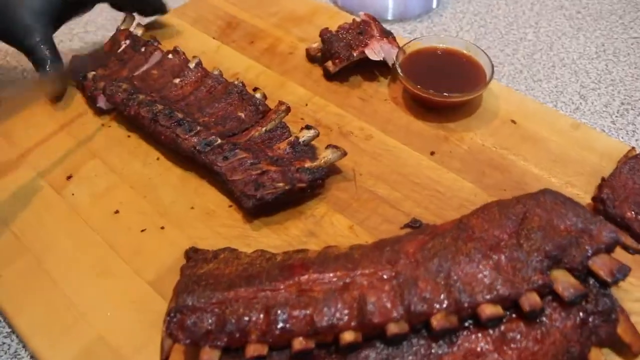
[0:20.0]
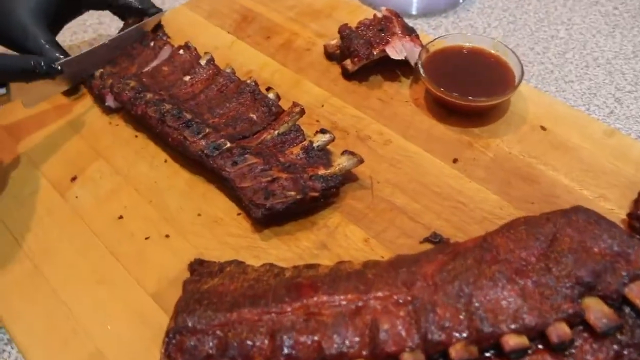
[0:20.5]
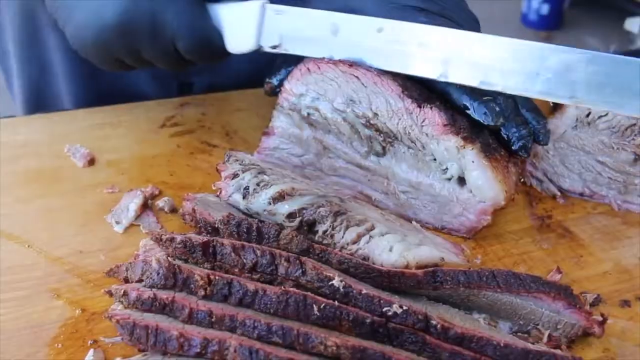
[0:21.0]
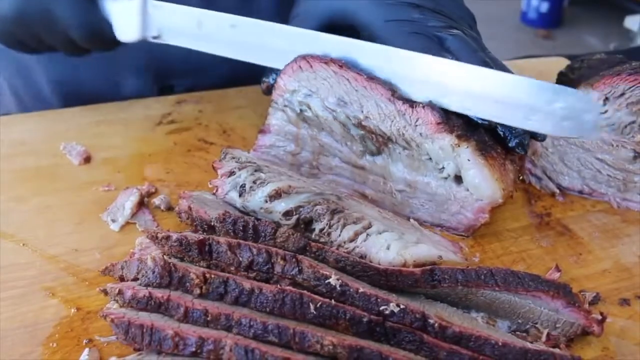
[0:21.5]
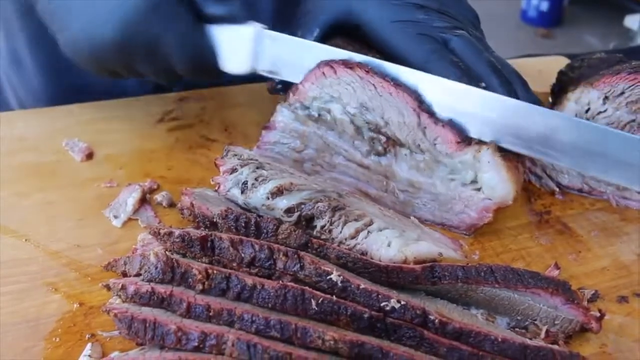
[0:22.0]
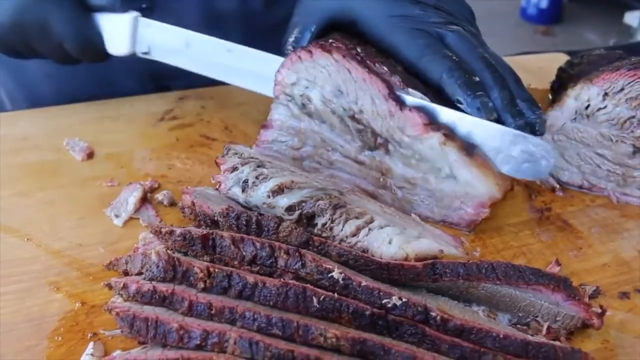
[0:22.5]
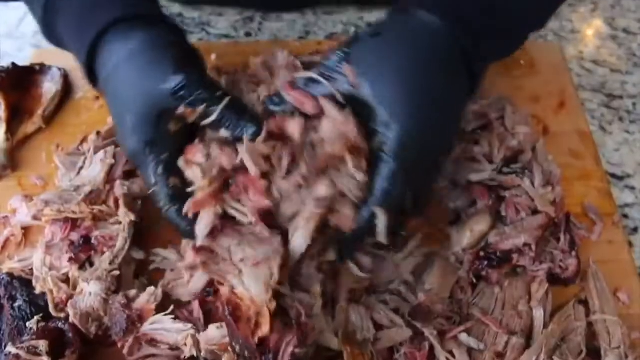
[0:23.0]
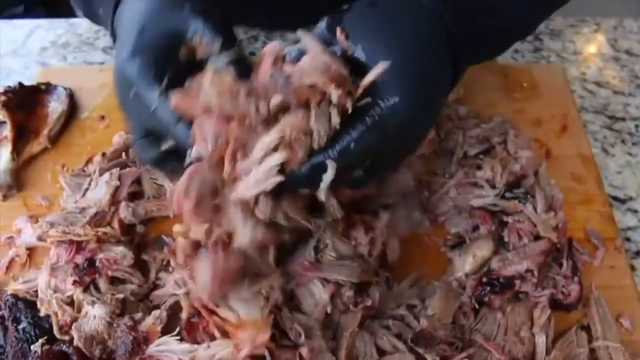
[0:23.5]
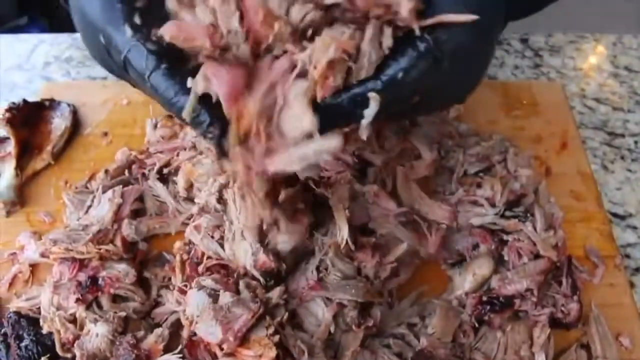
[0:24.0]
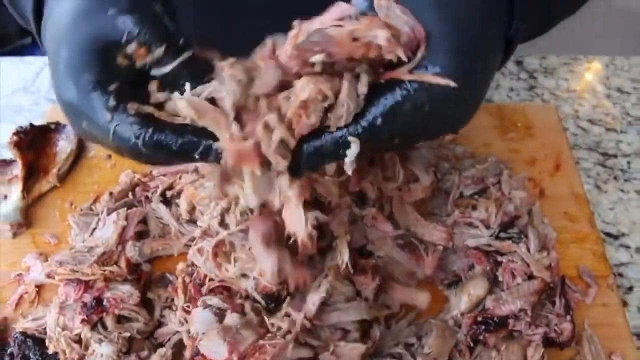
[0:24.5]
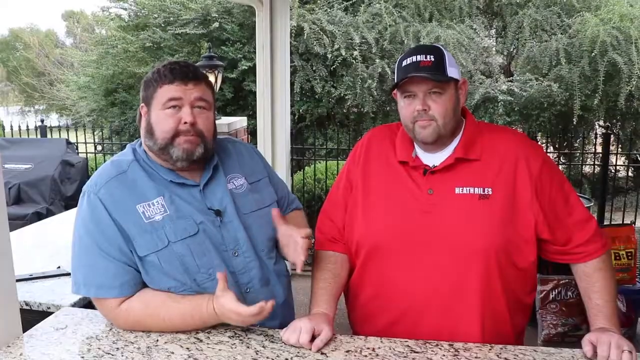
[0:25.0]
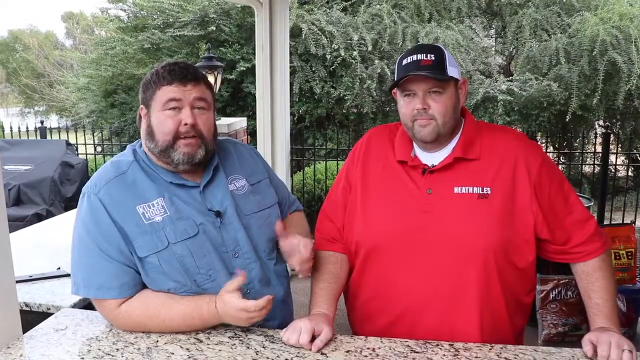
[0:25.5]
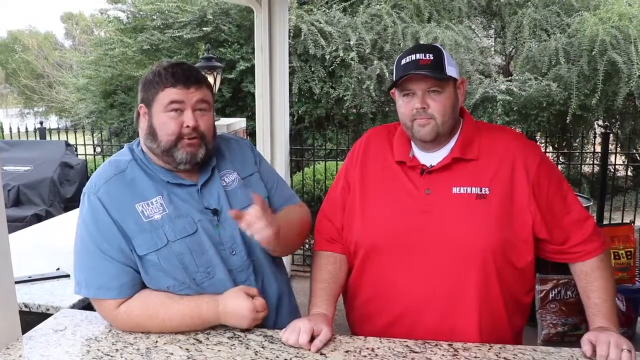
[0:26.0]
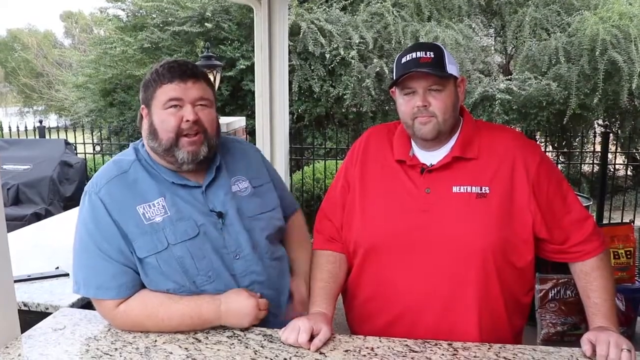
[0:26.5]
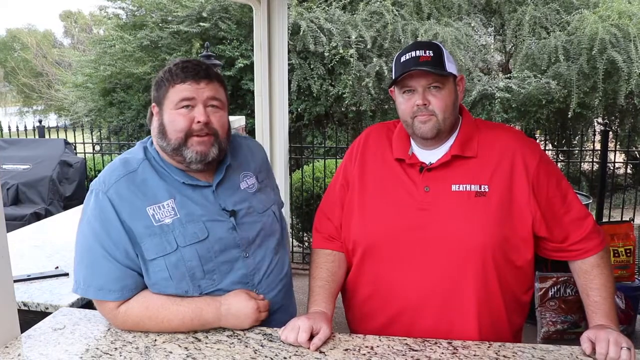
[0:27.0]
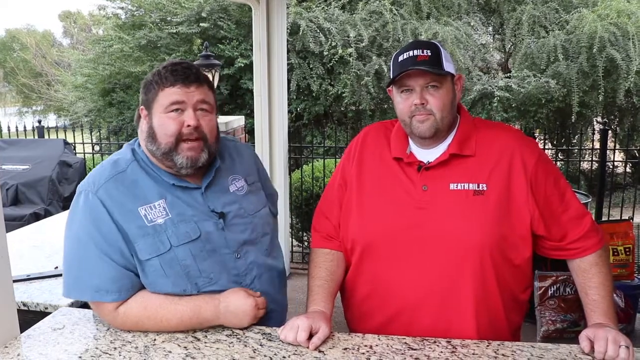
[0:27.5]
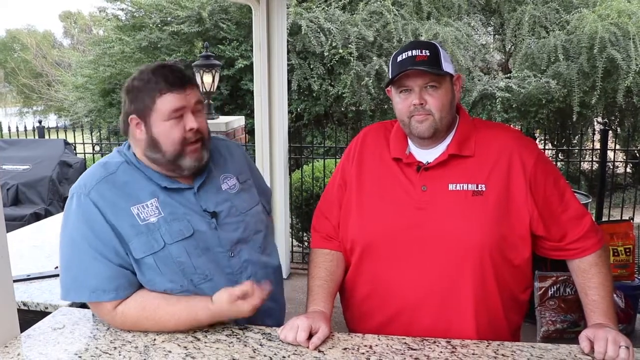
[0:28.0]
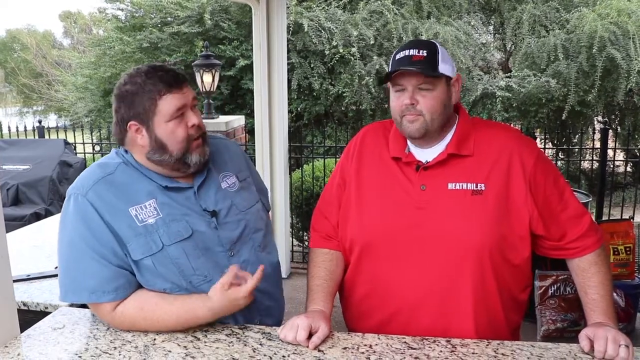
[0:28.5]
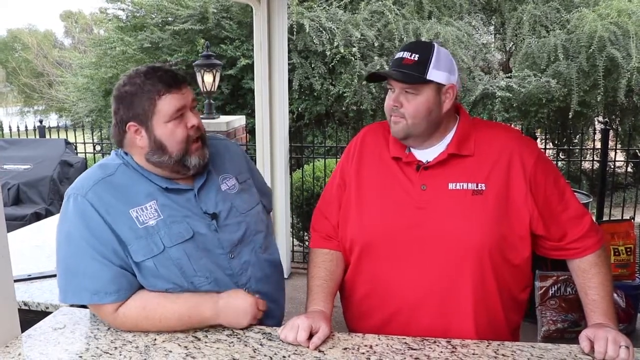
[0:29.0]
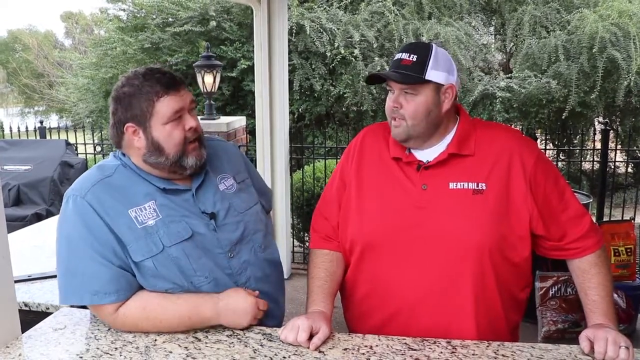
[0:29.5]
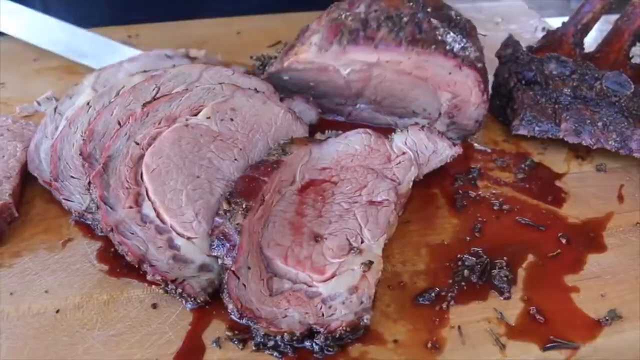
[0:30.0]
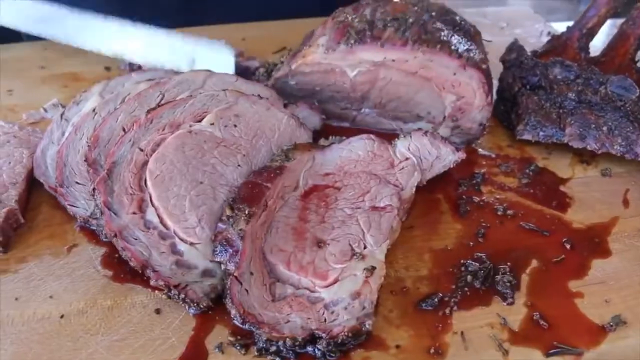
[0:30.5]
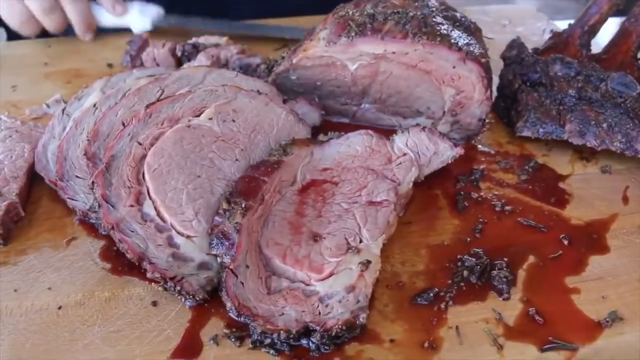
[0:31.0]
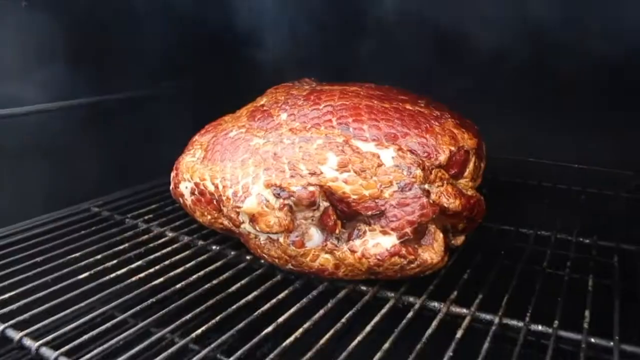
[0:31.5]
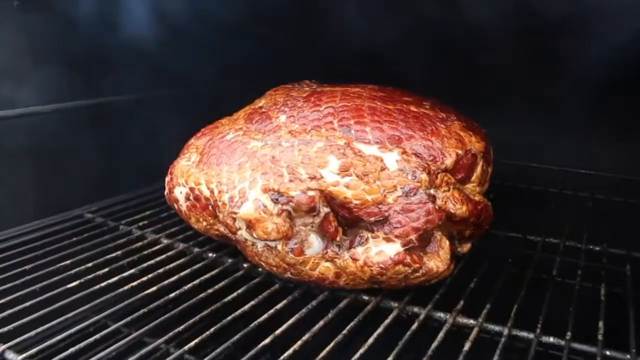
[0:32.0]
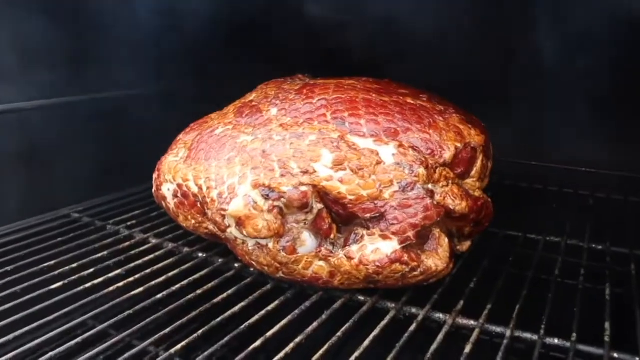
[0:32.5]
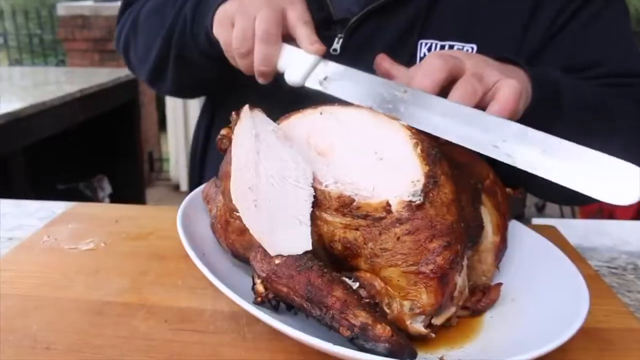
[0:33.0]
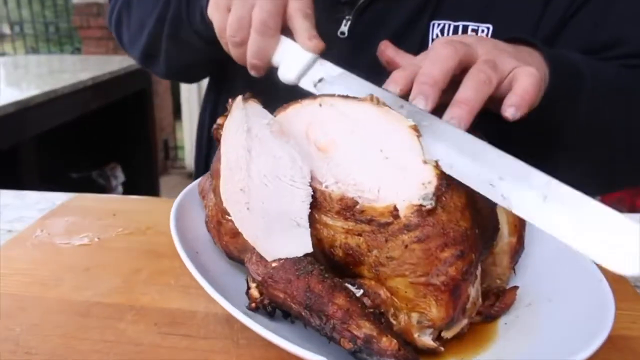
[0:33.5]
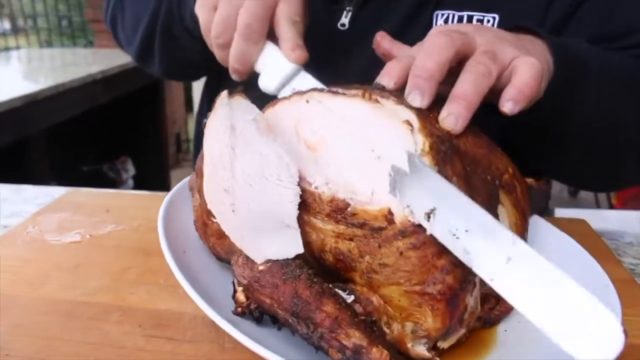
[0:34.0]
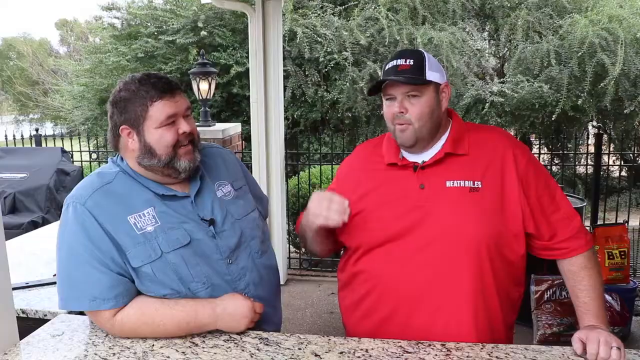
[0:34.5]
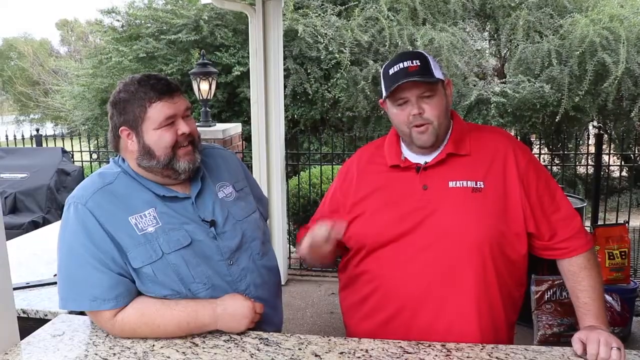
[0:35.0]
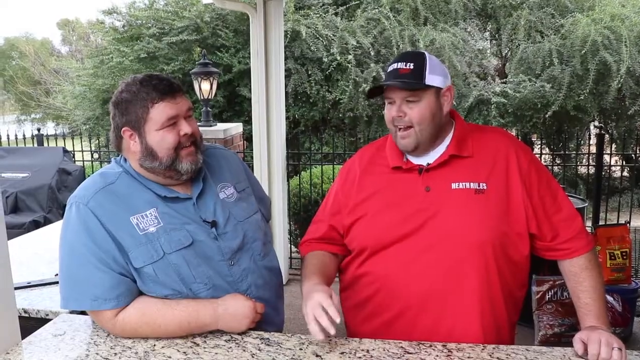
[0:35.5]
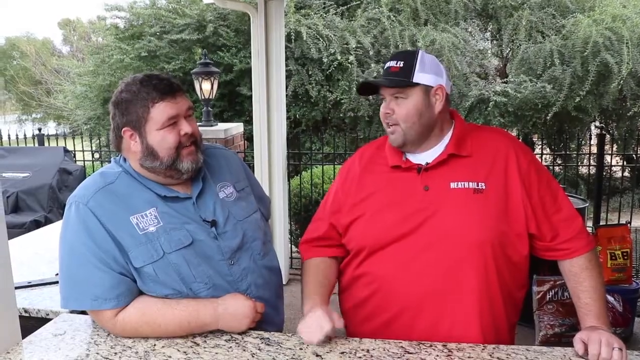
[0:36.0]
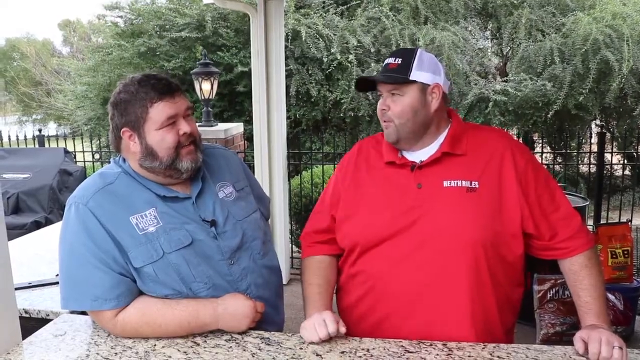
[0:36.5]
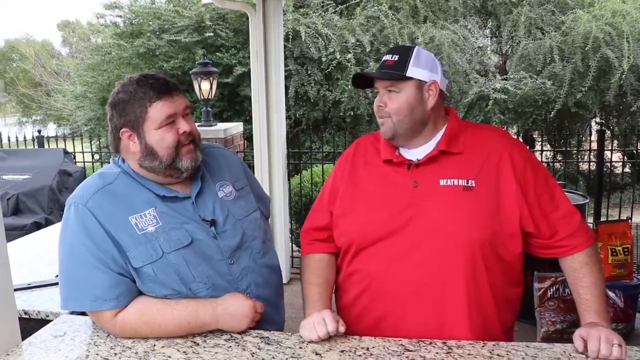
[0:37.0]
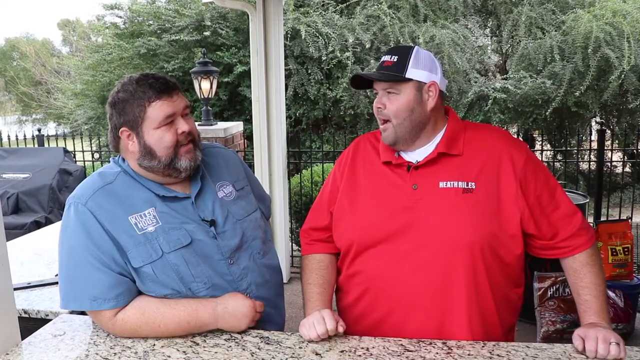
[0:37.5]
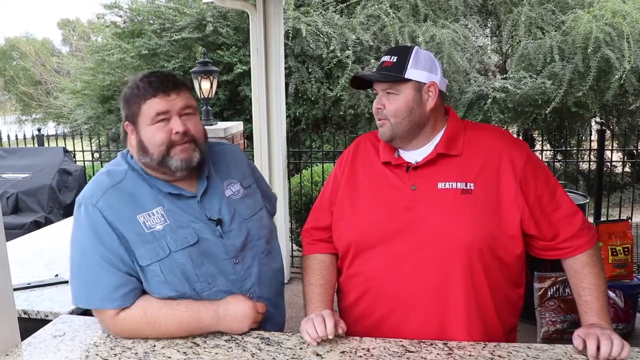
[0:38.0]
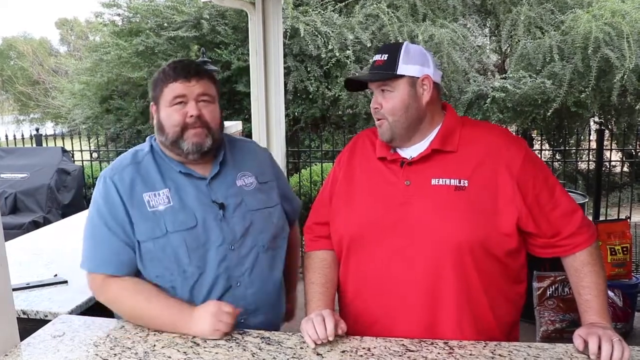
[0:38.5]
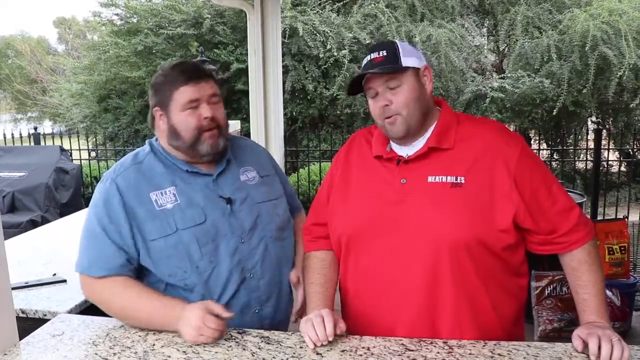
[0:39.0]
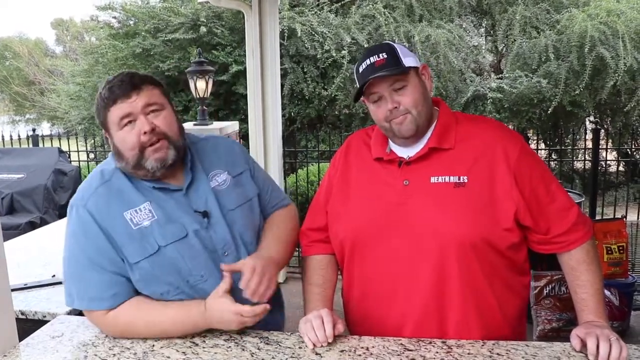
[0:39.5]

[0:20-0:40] Different types of meat are shown. First, ribs are cut on a wooden cutting board with a side sauce, by a person wearing black gloves and using a very sharp knife. Another scene shows a large piece of brisket being cut into several slices on a wooden board with a sharp knife, juices dripping out of the juicy meat as it is cut. Another image shows meat shredded into several little pieces. The scene returns to the two men speaking about grills and smokers, standing beside each other. One wears a red shirt with a white shirt underneath and a cap; the other wears a blue collared shirt and has short hair and a grey and brown beard. A piece of gammon is then shown on the grill and smoker.